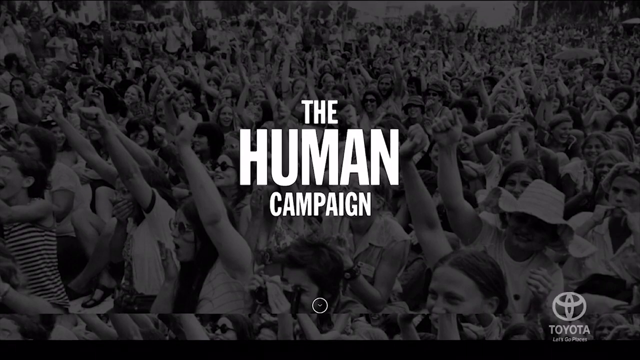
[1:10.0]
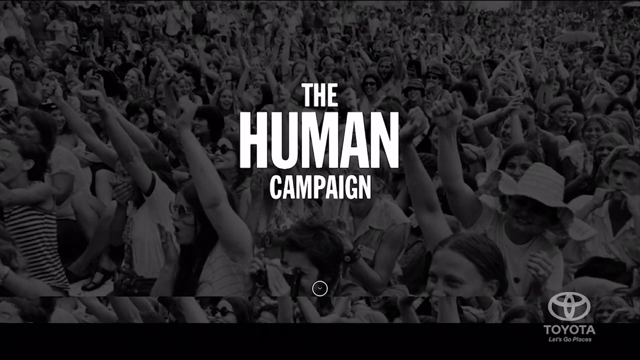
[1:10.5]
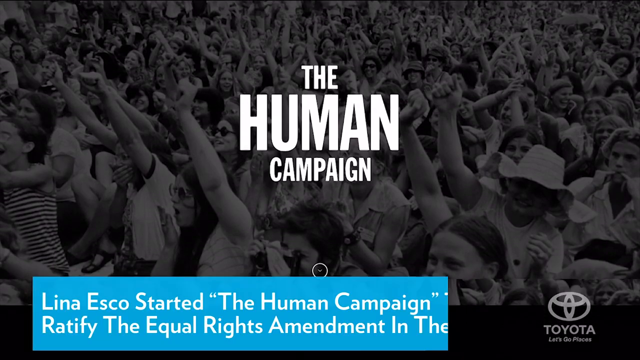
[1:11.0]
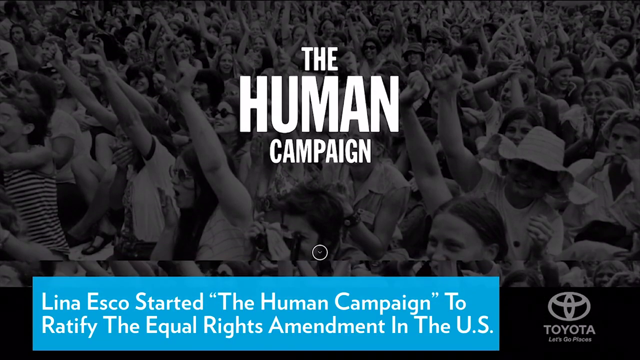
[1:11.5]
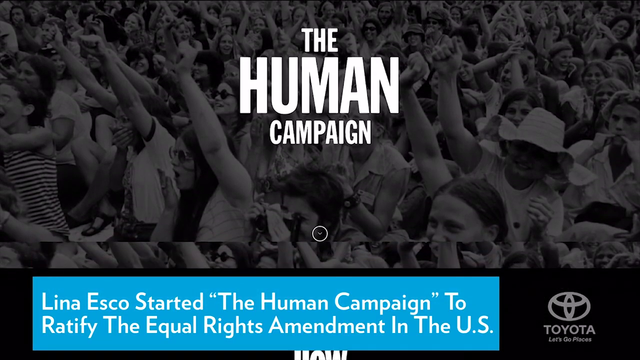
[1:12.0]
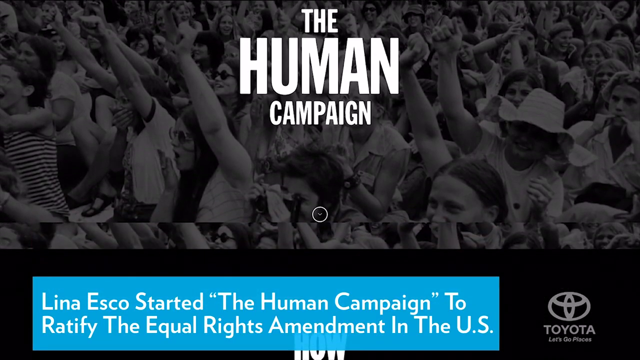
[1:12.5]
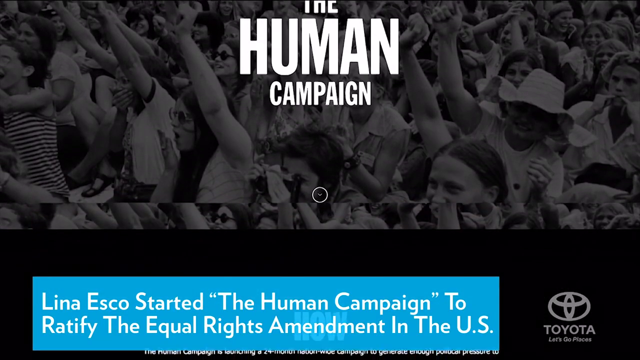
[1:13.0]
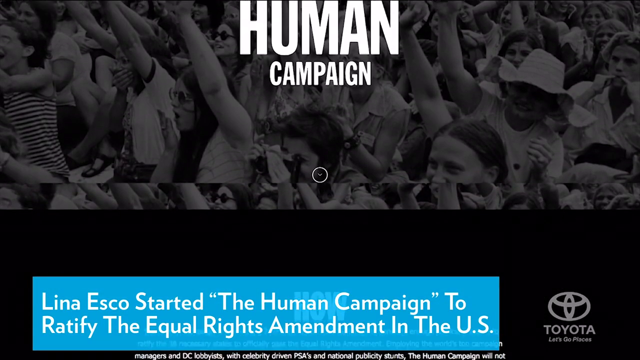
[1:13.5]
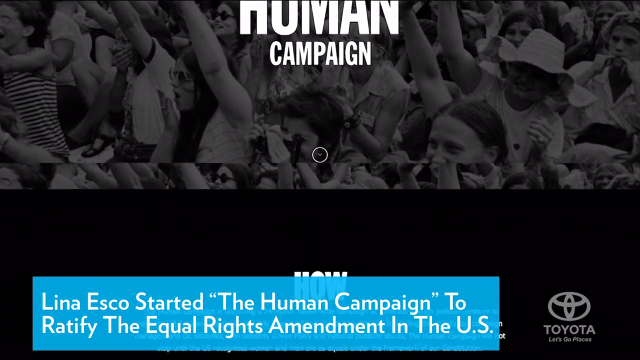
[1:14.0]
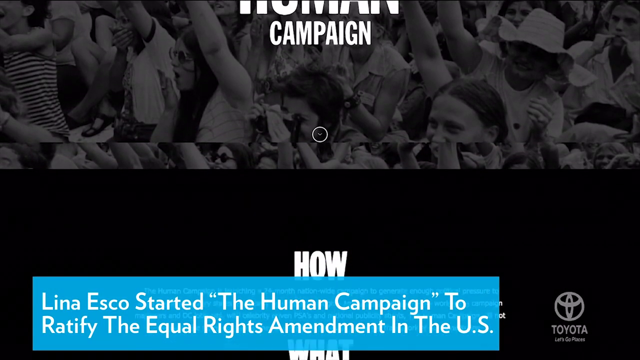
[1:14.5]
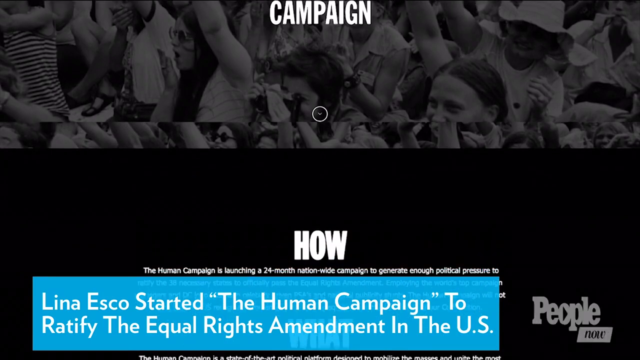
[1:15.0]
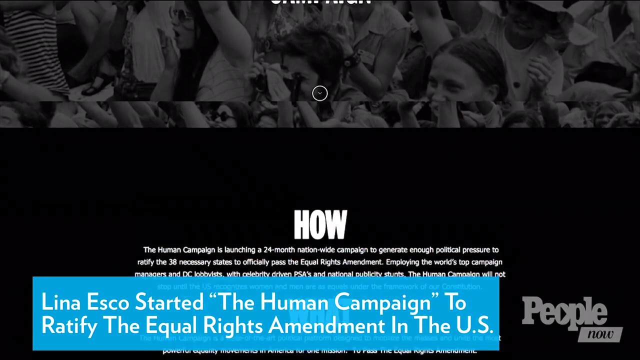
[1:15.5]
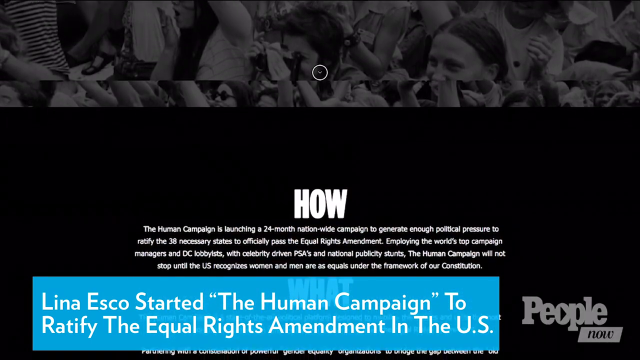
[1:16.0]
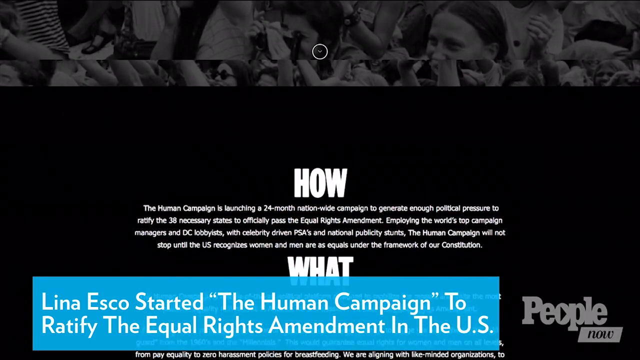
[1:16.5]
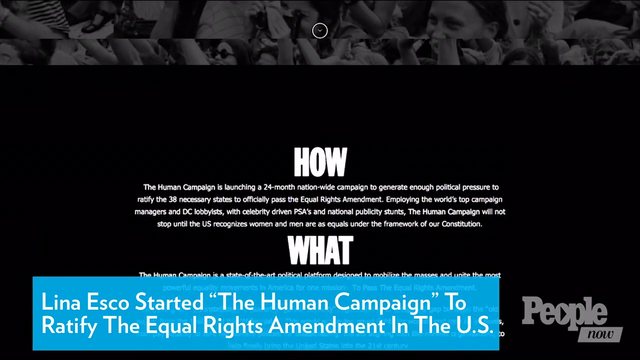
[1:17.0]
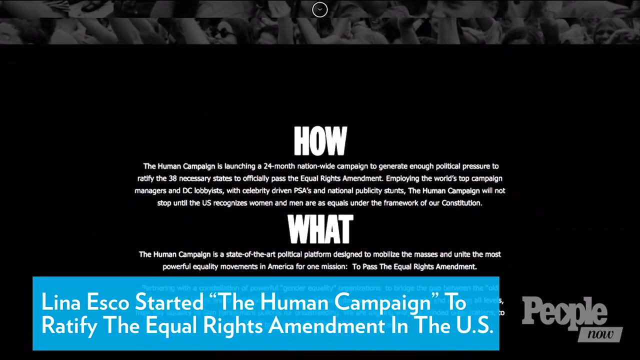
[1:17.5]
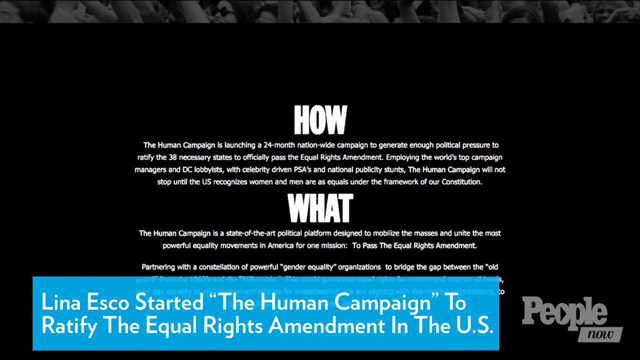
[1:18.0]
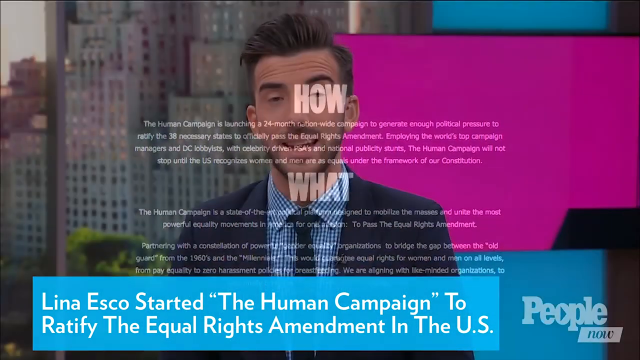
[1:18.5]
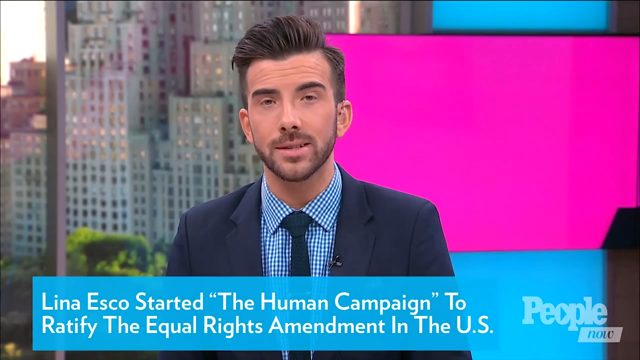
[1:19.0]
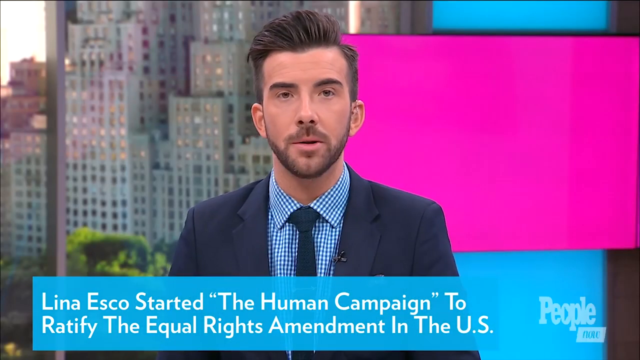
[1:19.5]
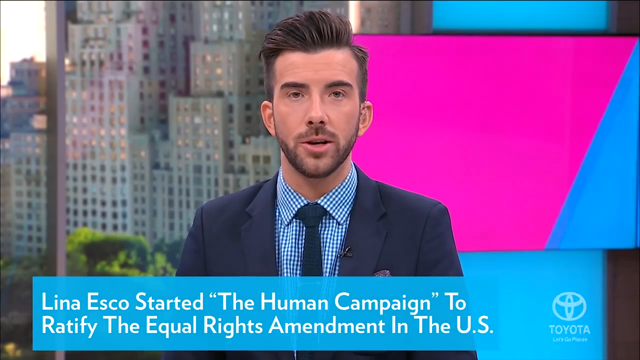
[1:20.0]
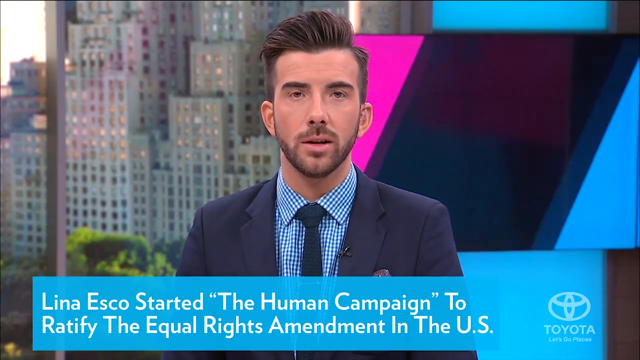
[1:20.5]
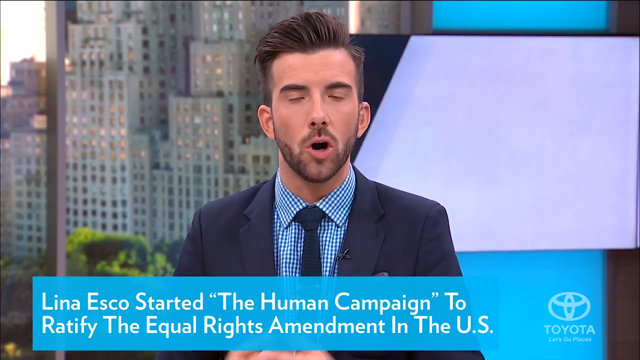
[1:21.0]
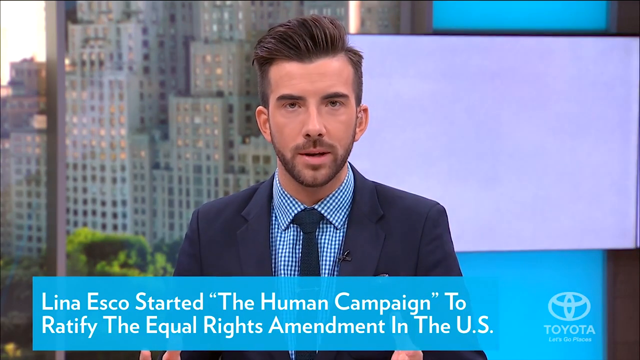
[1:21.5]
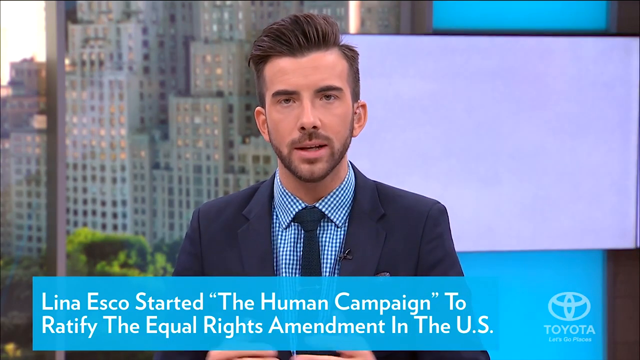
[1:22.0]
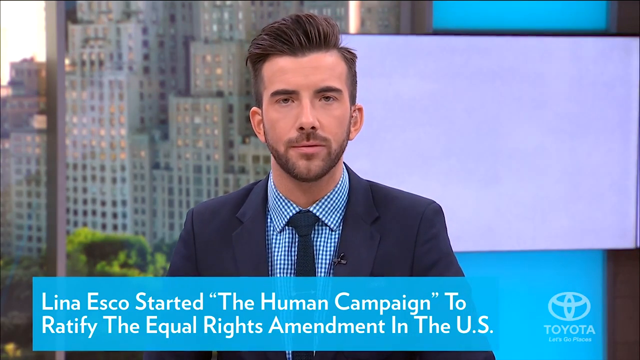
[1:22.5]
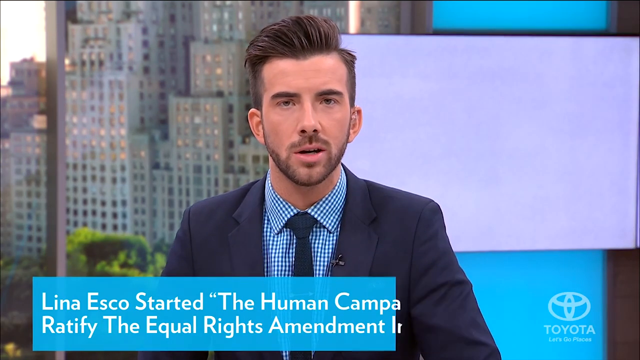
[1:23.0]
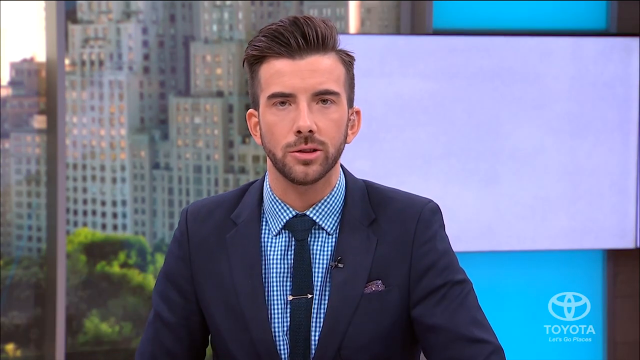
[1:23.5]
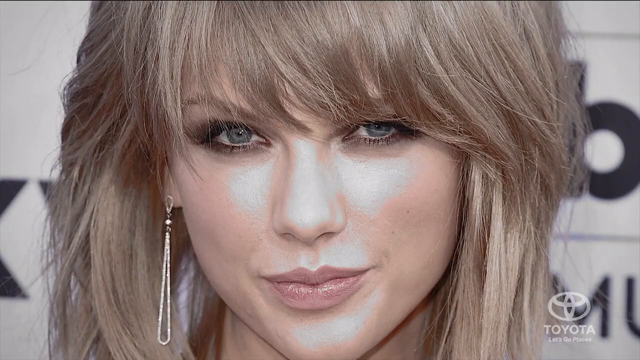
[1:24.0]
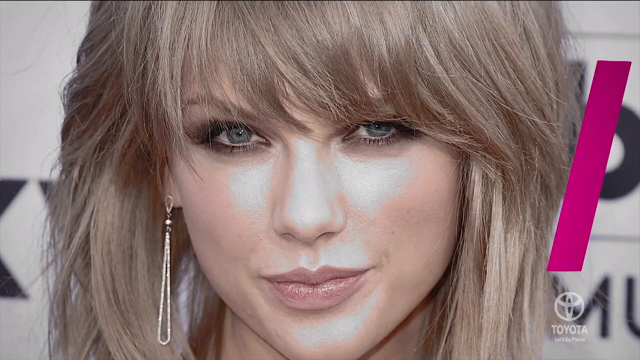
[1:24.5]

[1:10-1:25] The shot begins with a picture with "the human campaign" written on it. Next, on-screen text reads "Lena Esco started the human campaign to rectify the equal rights amendments in the US", with other text lower on the screen. After a while the scene moves to the reporter talking in the studio, a man with black hair facing the camera directly, wearing a navy blue suit, a shirt and a tie. The video also cuts to a picture or video that moves by very quickly before moving on.